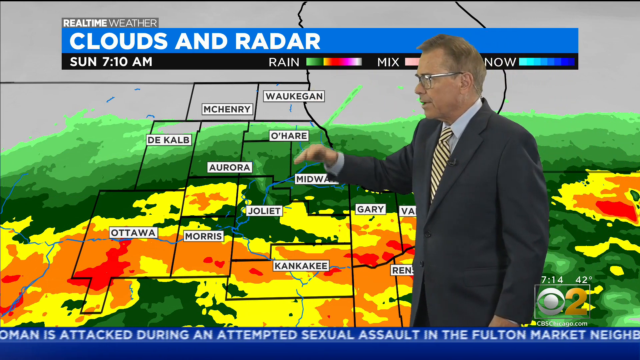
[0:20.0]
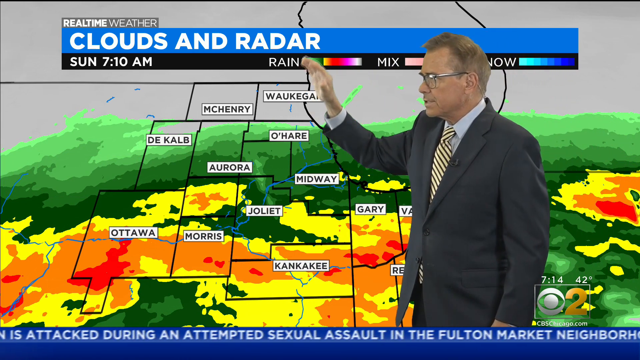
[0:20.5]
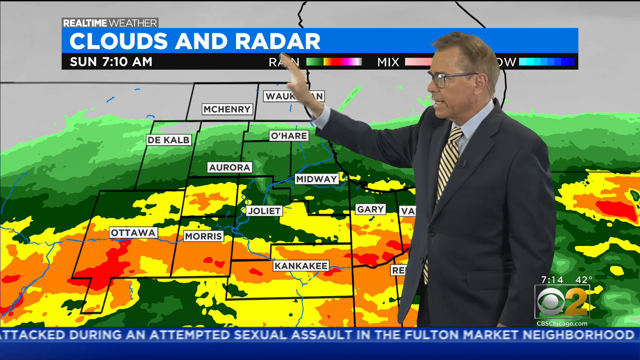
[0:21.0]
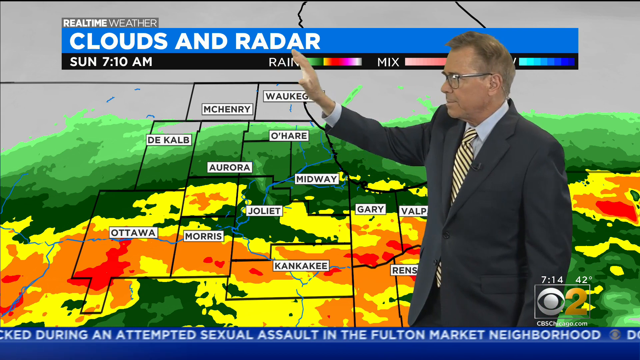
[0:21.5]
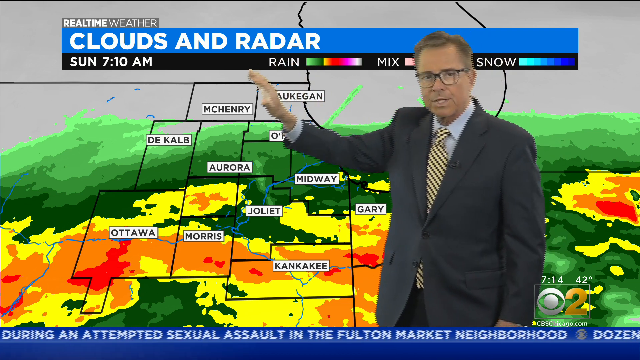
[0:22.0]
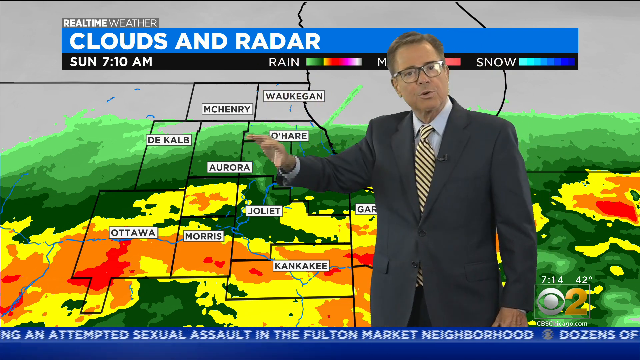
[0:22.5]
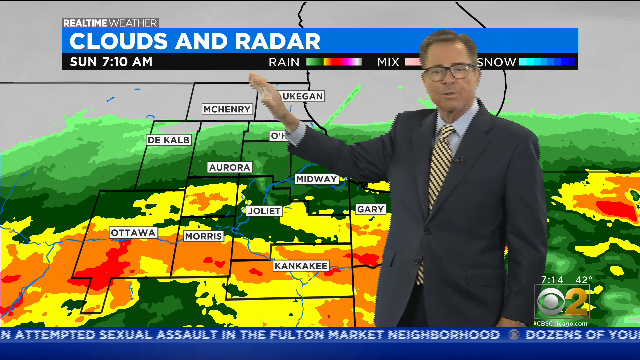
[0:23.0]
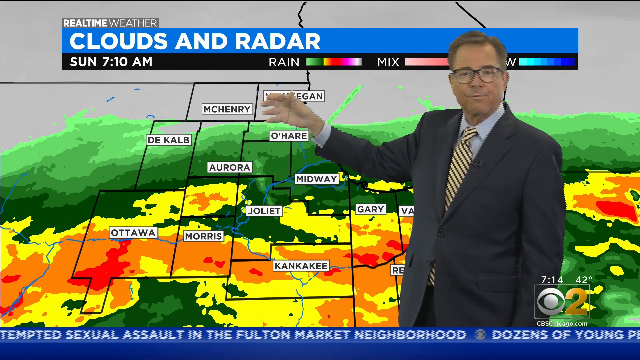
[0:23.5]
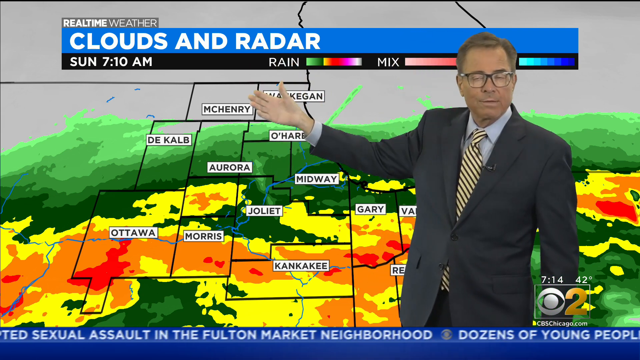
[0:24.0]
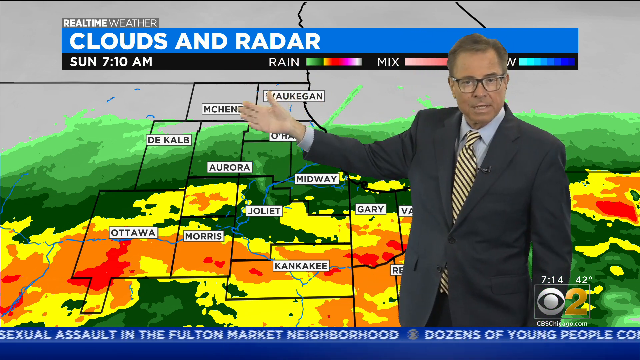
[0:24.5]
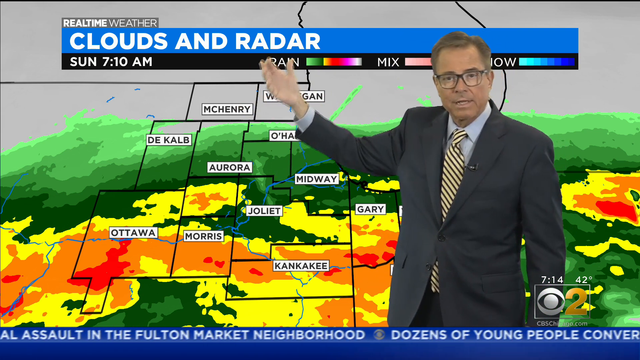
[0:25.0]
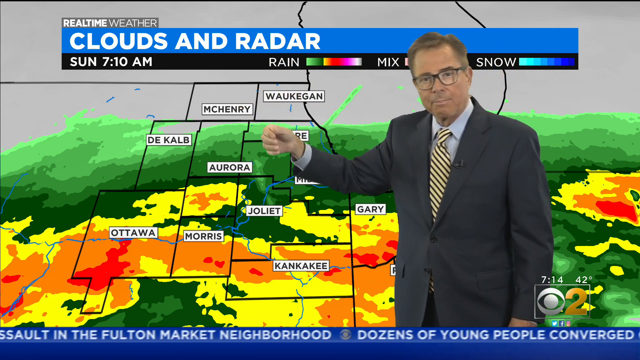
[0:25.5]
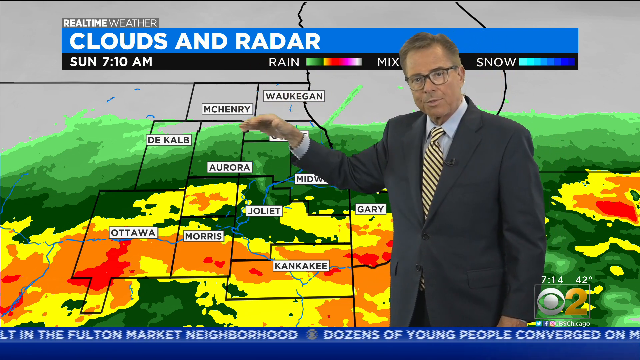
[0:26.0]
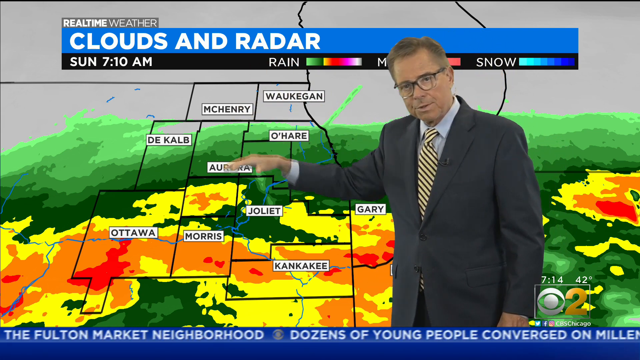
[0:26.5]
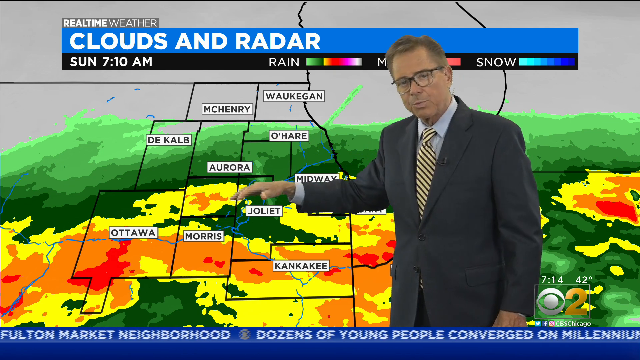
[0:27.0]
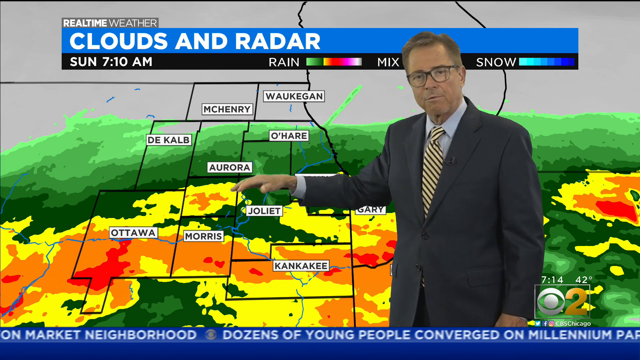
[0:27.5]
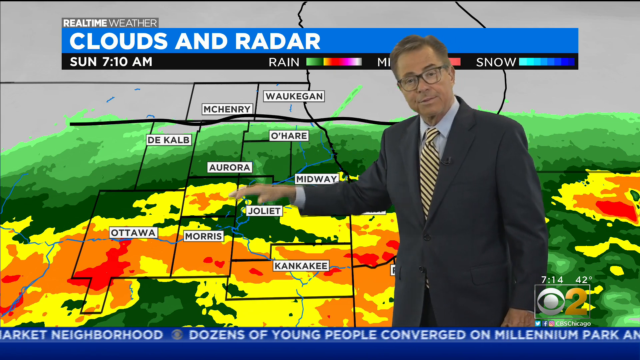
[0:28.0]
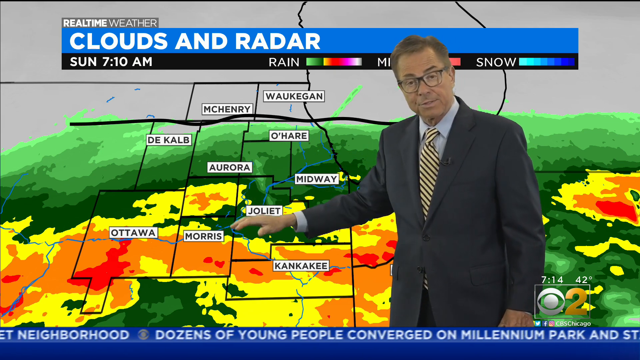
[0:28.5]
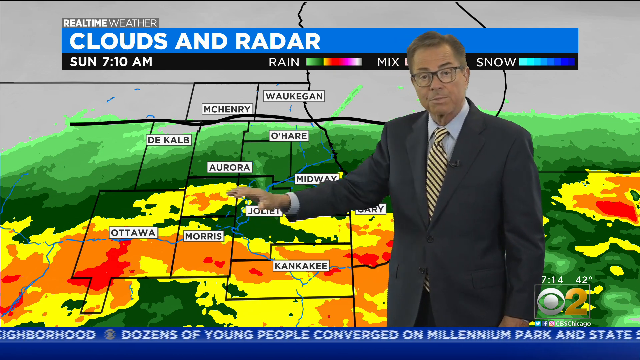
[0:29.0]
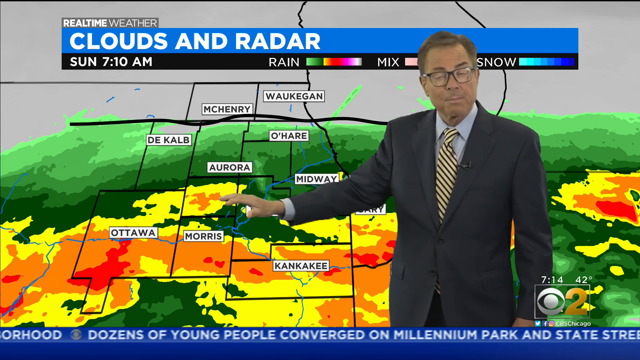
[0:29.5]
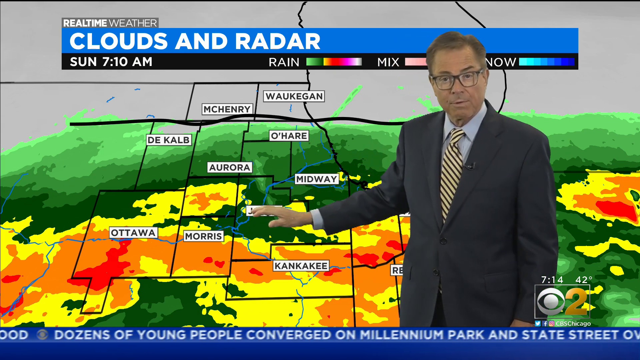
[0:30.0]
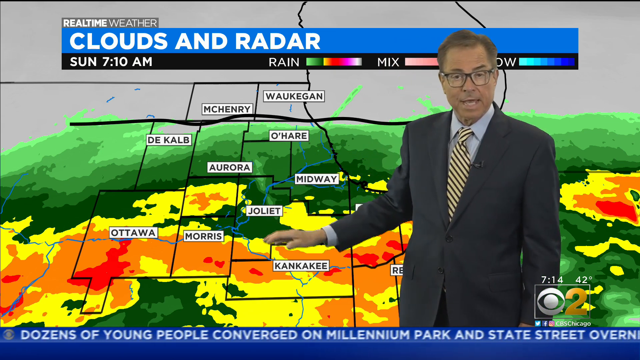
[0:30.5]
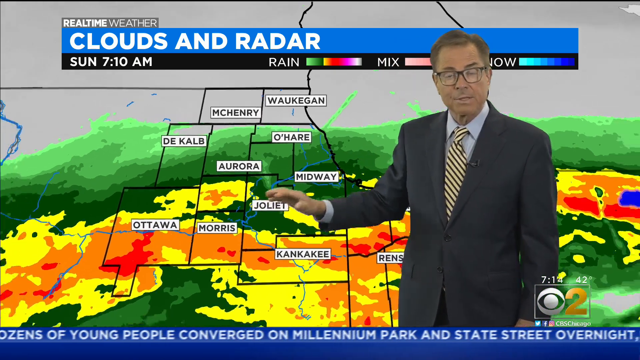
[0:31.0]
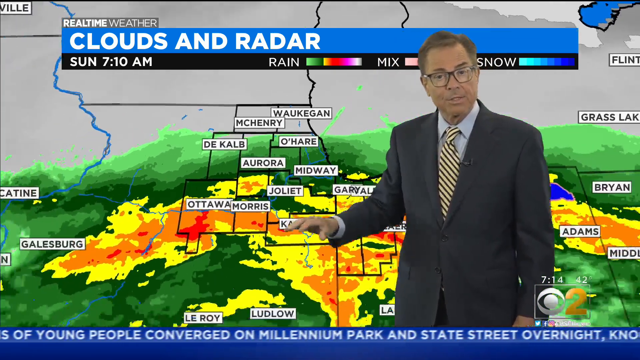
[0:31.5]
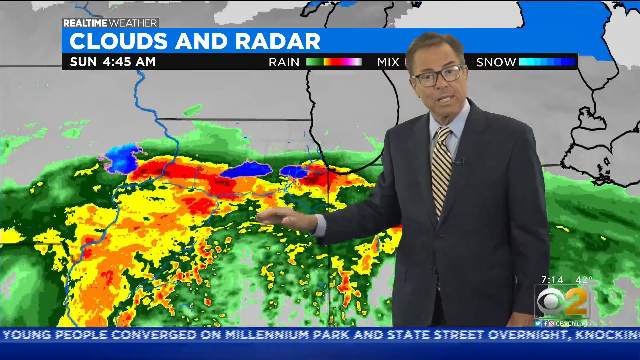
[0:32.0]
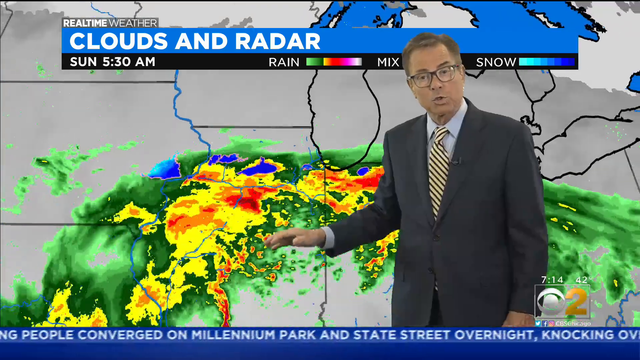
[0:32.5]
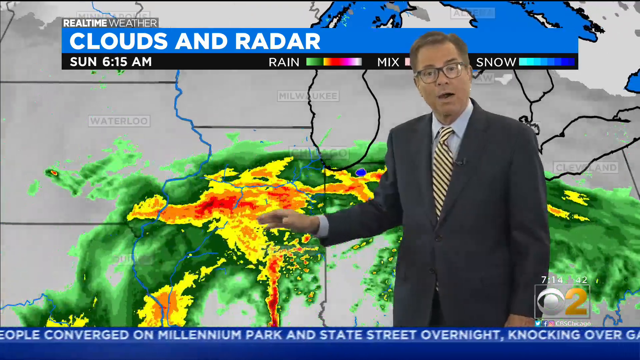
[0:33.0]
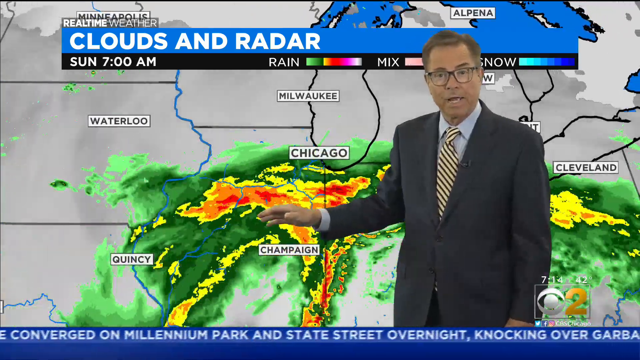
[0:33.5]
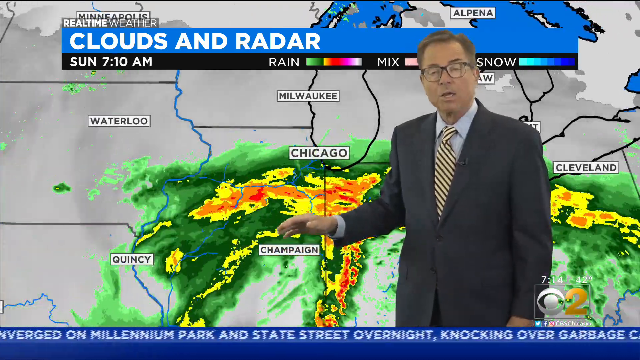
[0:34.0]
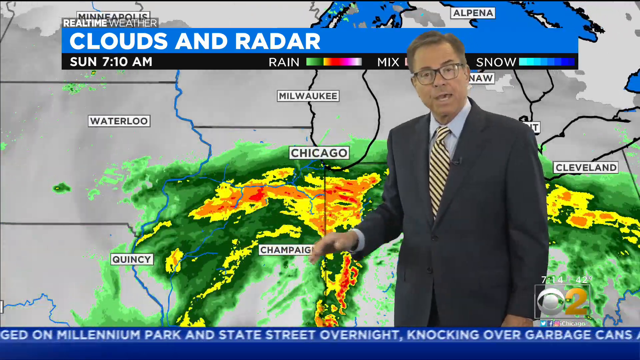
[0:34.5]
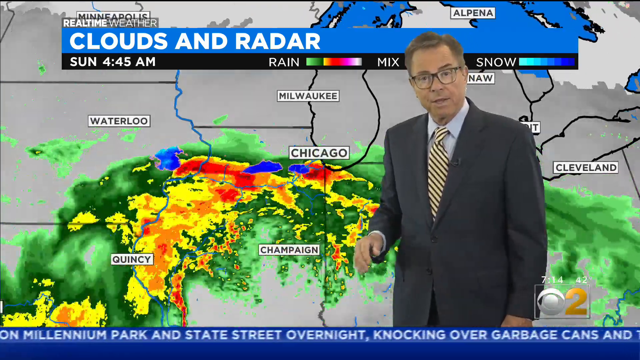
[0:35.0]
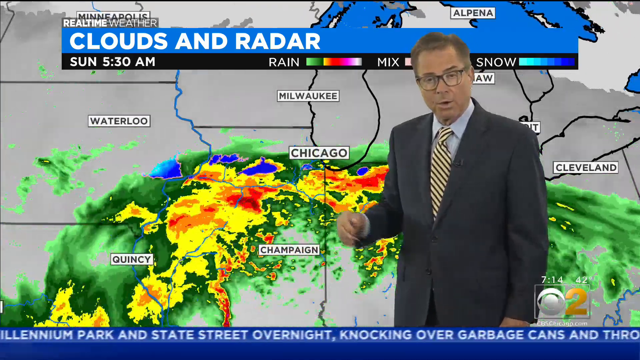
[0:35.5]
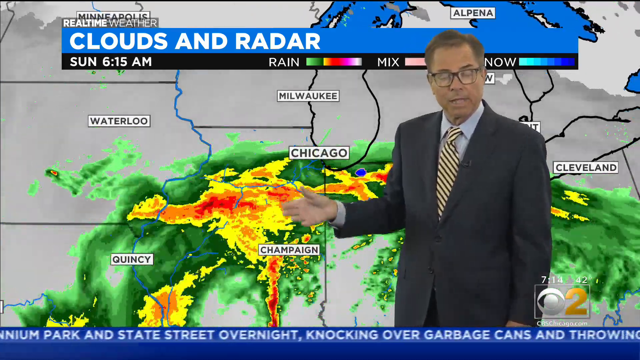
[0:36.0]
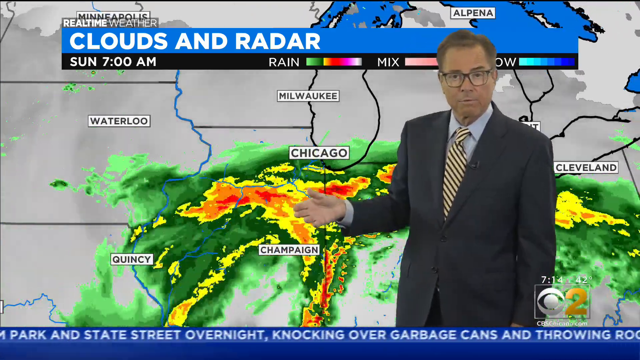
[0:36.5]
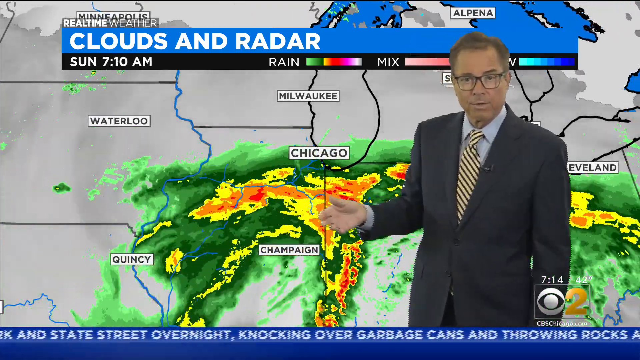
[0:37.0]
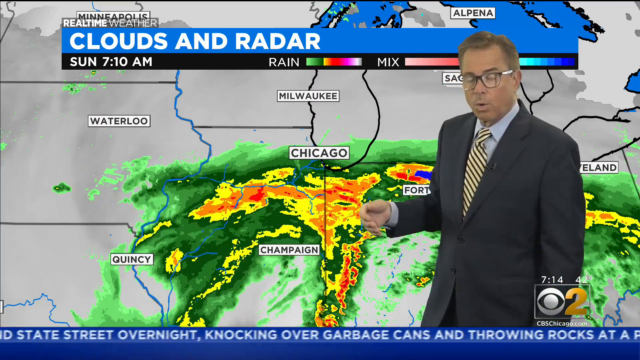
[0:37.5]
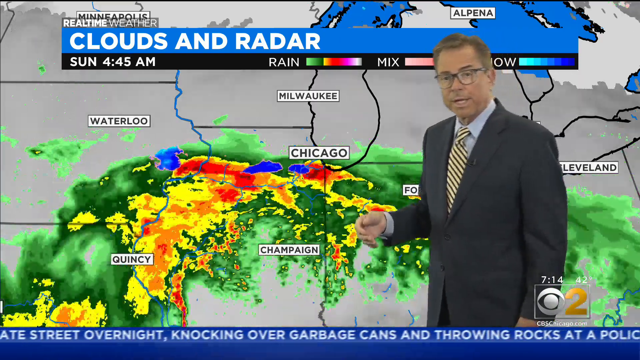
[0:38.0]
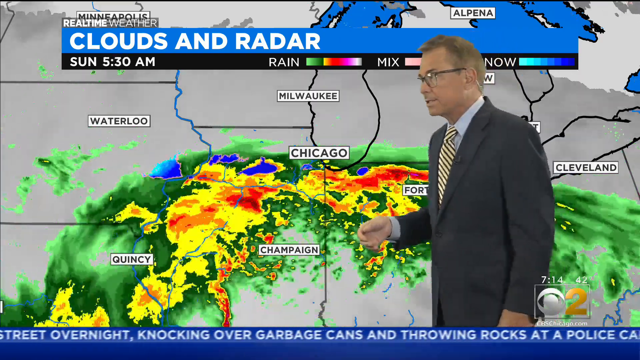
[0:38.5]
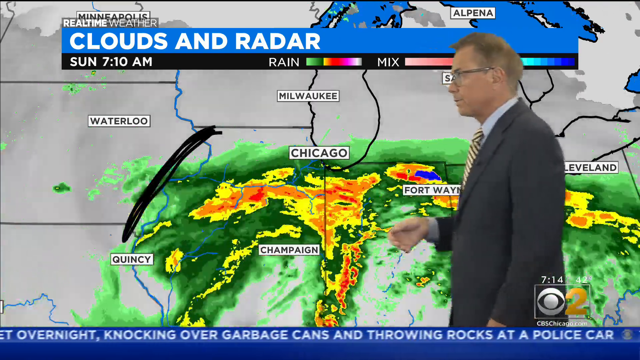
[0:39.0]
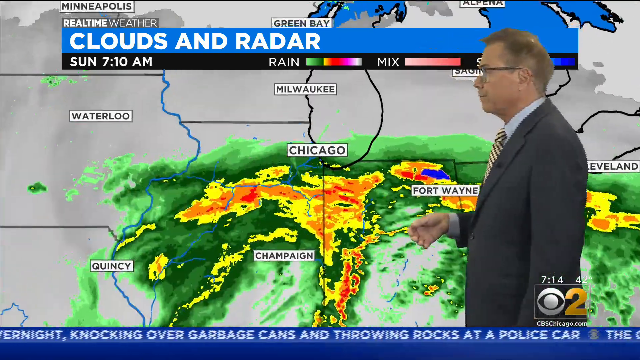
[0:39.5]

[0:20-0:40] The presenter demonstrates with hand gestures. Something that looks like a map, greenish, yellow and orange, moves in slow motion along with his hand gestures toward the parts he is explaining. Chicago is written in black and white, with a yellow color placed on it, apparently indicating no sign of rain there. Behind him are indications for rain, mix and snow: rain is shown in green, yellow, red and pink, the mix indicates both rain and snow, and snow is shown in light blue and dark blue.